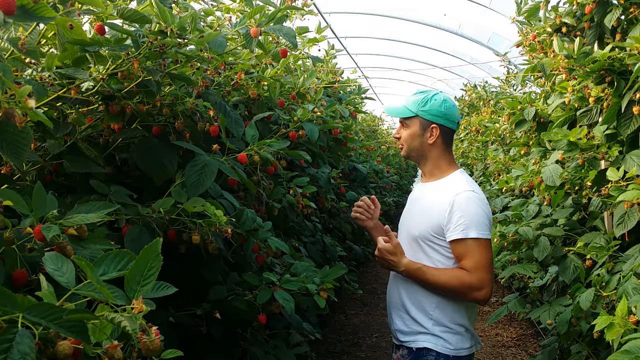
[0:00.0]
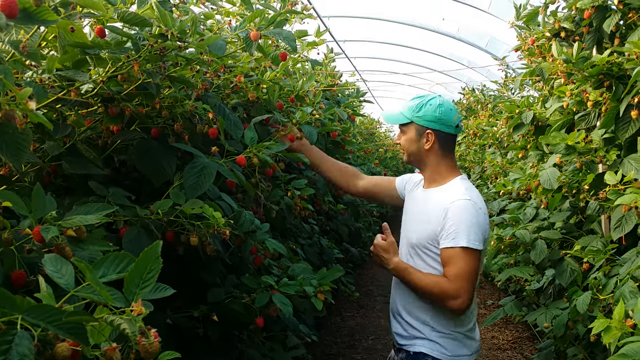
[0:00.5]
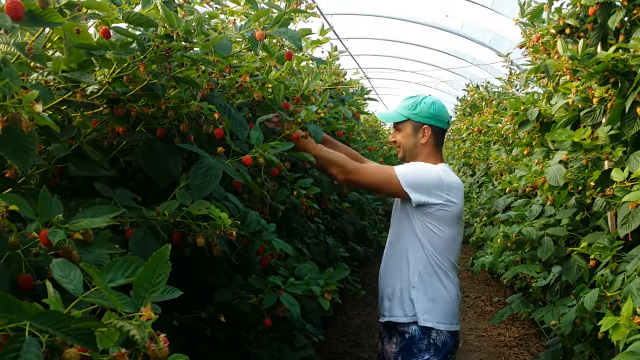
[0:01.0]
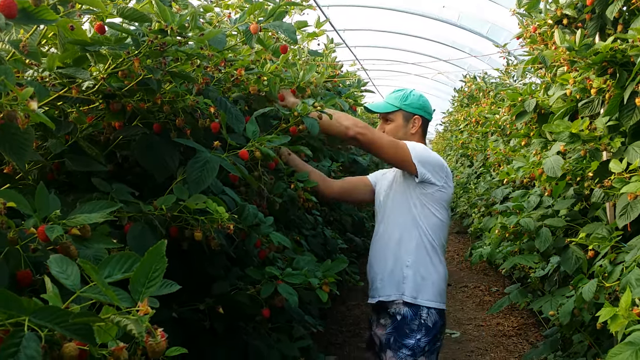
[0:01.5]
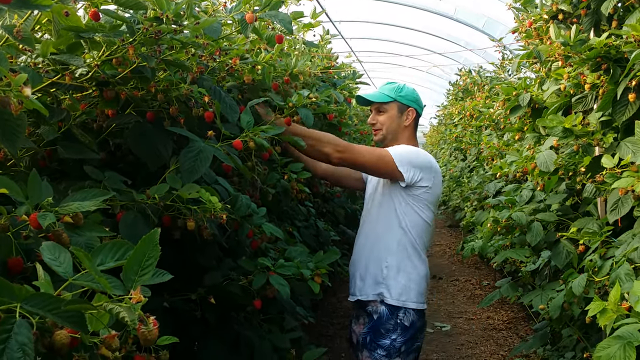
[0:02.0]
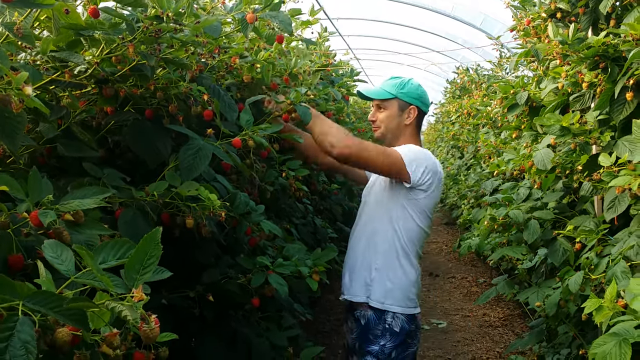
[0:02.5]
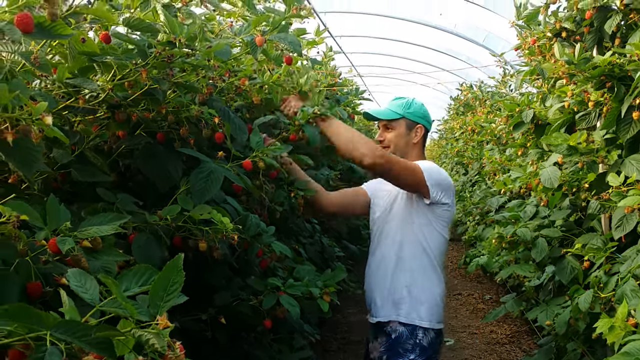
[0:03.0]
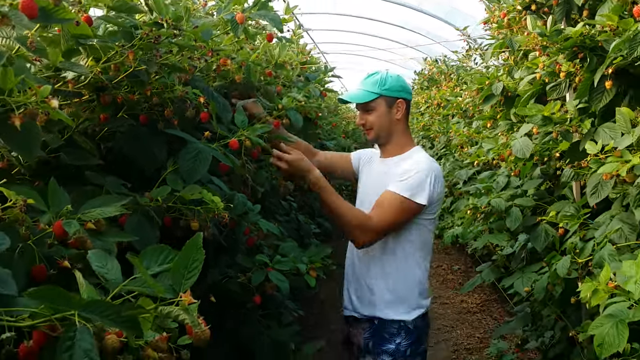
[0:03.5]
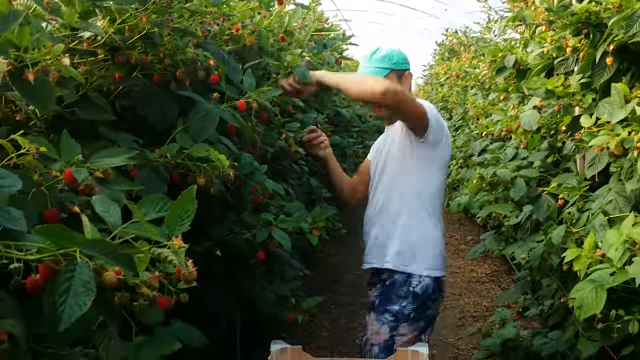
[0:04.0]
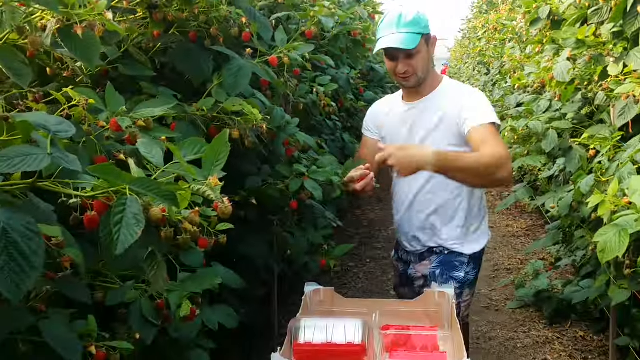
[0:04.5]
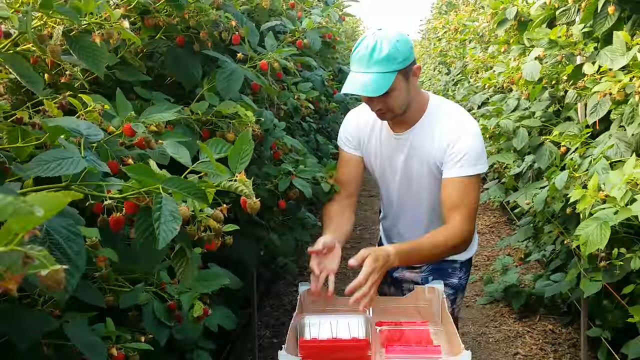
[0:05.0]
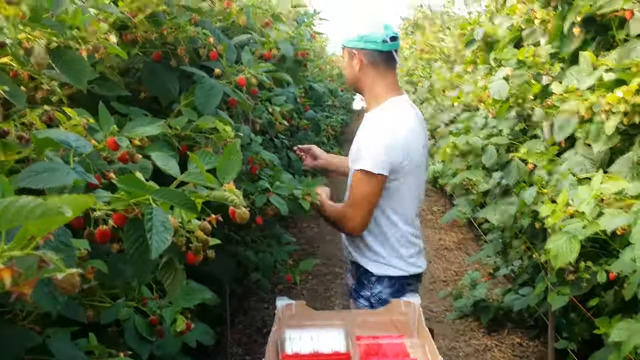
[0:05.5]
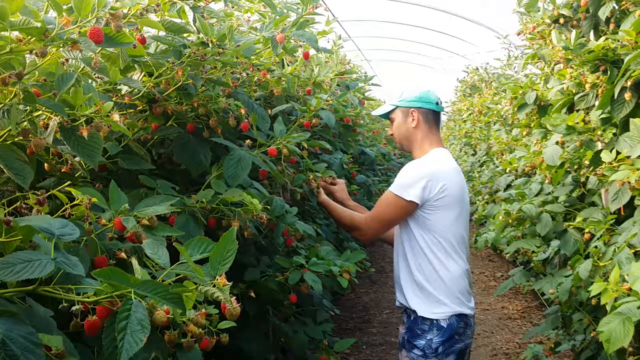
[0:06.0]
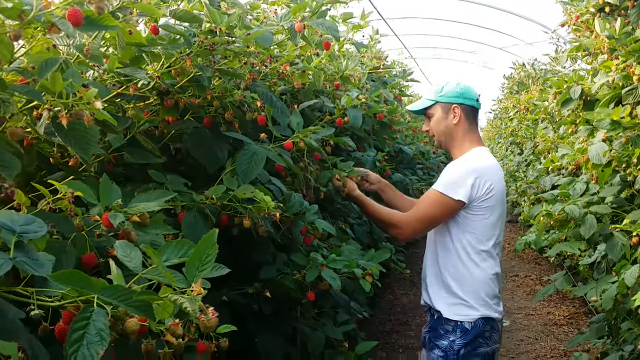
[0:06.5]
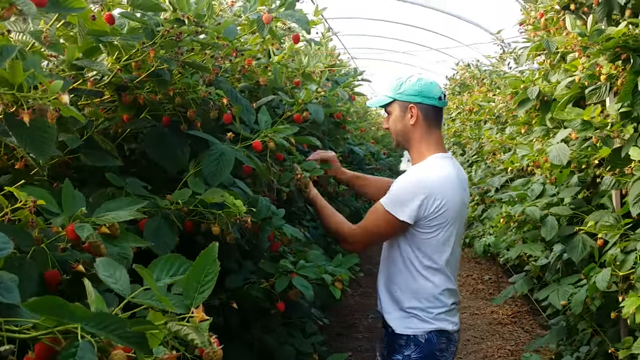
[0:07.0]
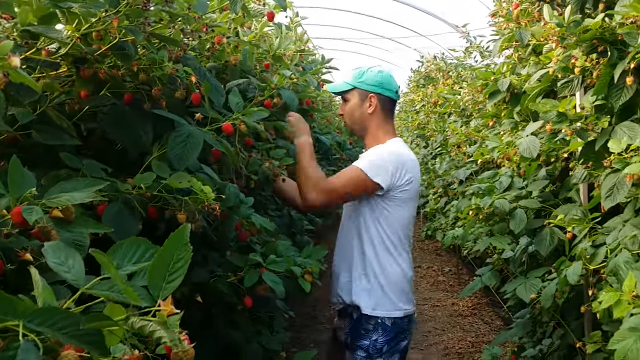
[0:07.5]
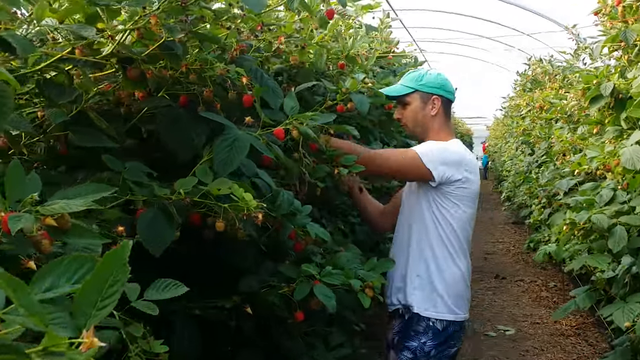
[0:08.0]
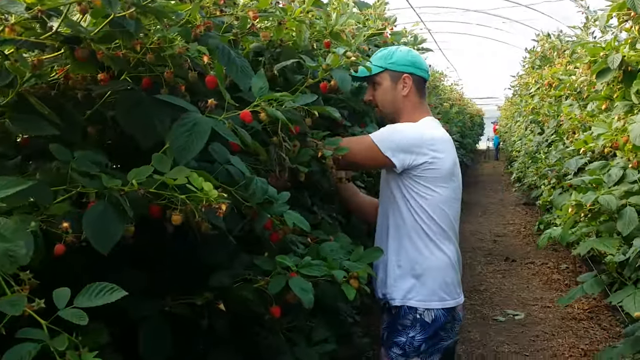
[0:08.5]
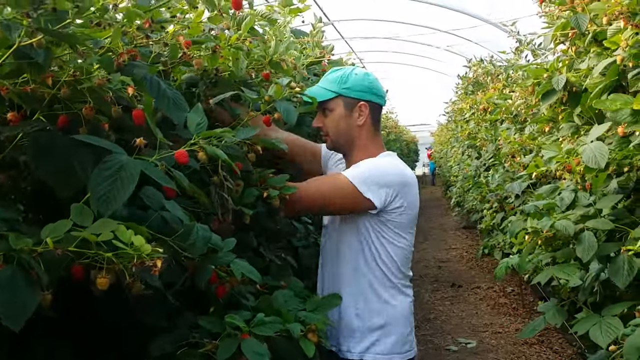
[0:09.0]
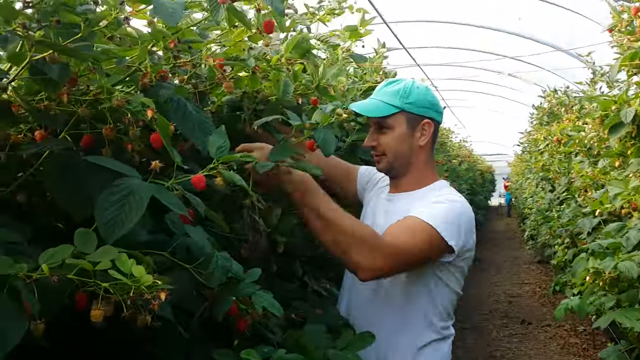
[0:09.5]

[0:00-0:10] A man wears a light mint-colored cap and a white short-sleeved t-shirt, and he appears to be in a greenhouse. His mouth is moving as he talks. He picks what look like strawberries and puts them in containers on a cart on his left side. He takes only the ripe berries that are ready to come off; some are still growing and not red yet, and some are yellow and slowly turning red. The ripe ones go into the bins next to him.